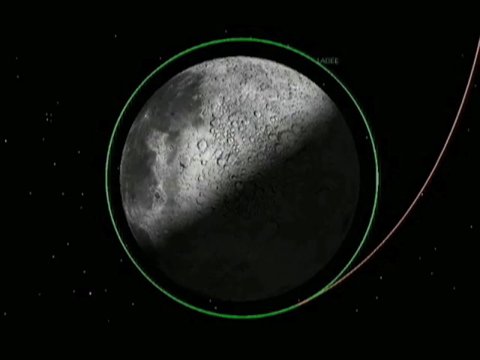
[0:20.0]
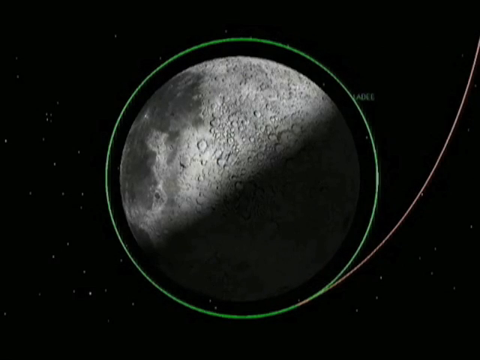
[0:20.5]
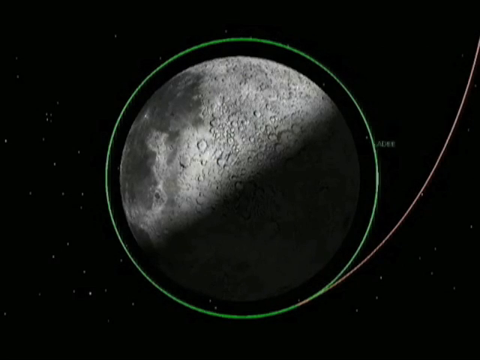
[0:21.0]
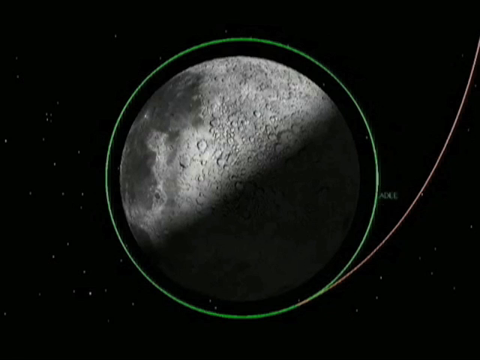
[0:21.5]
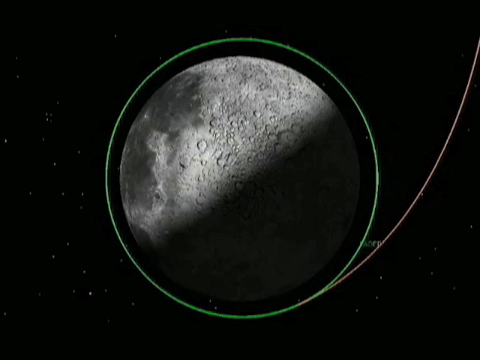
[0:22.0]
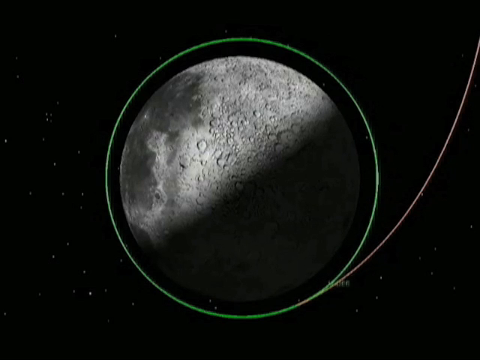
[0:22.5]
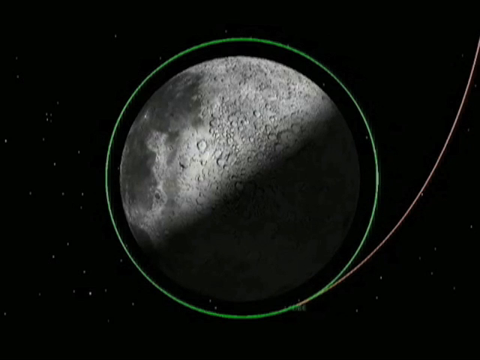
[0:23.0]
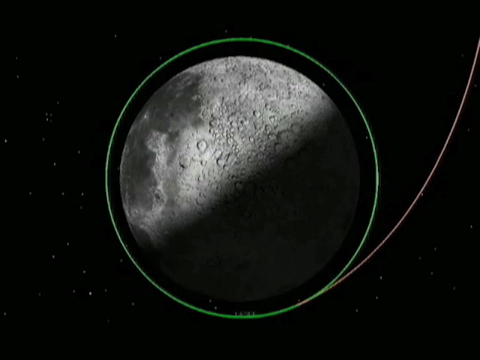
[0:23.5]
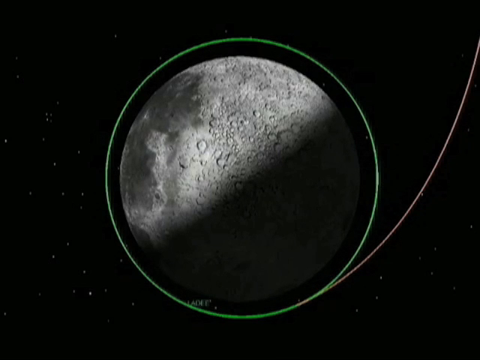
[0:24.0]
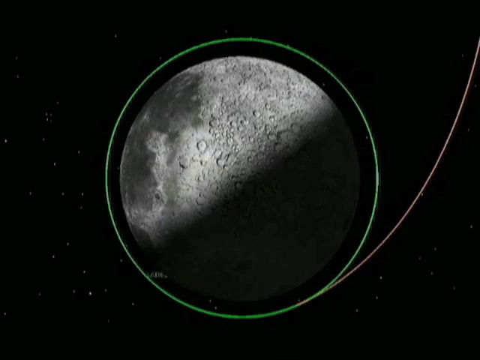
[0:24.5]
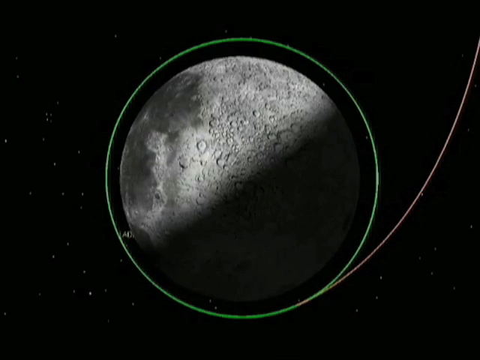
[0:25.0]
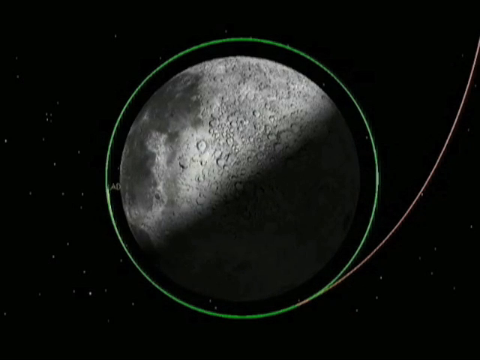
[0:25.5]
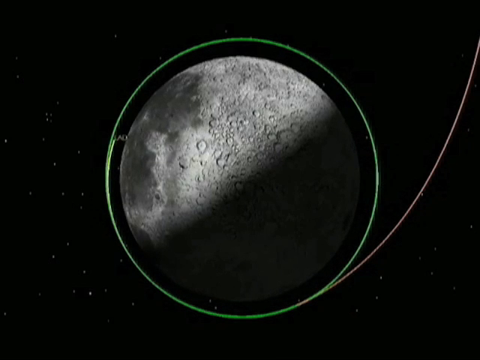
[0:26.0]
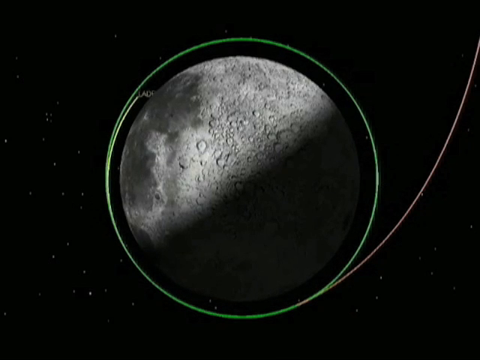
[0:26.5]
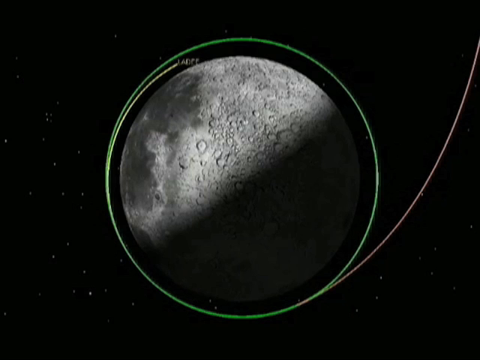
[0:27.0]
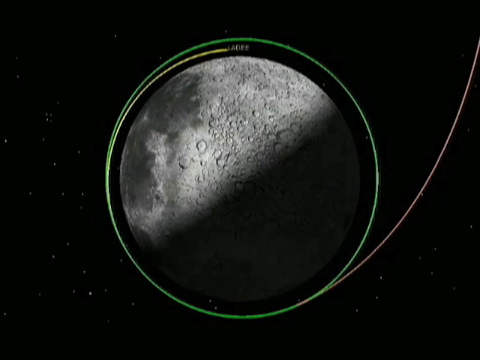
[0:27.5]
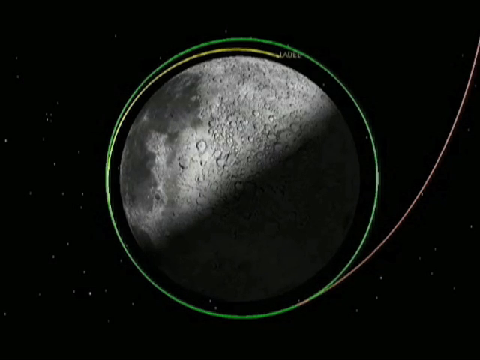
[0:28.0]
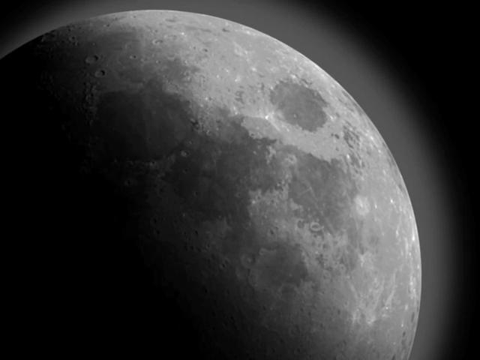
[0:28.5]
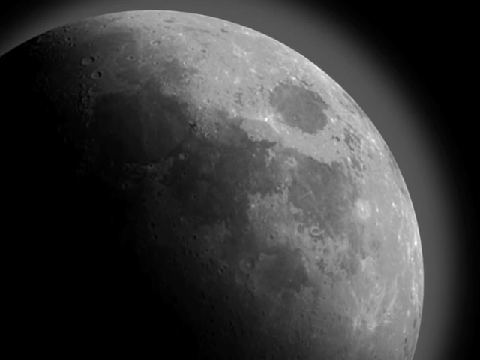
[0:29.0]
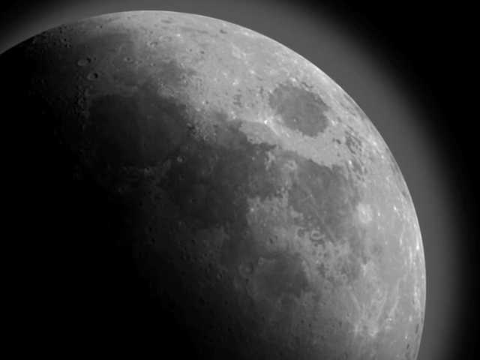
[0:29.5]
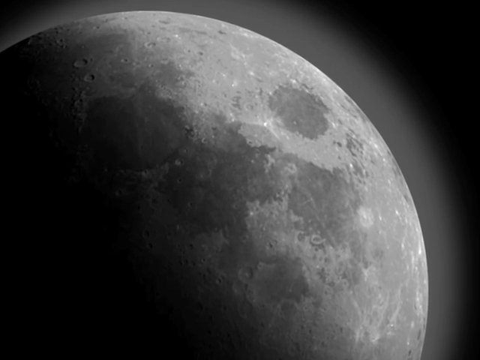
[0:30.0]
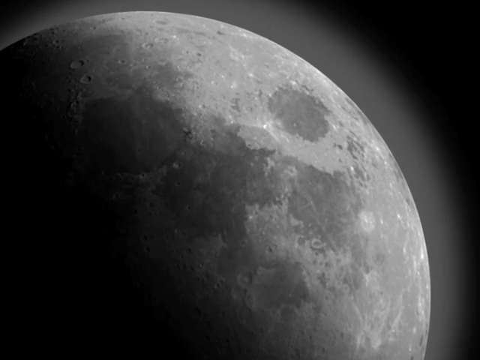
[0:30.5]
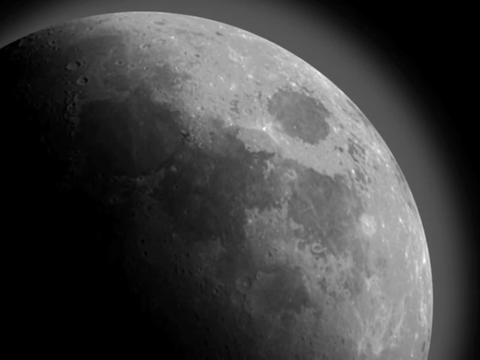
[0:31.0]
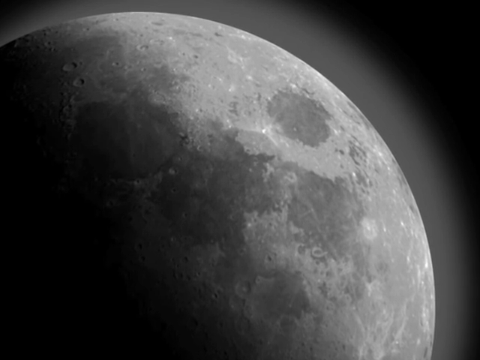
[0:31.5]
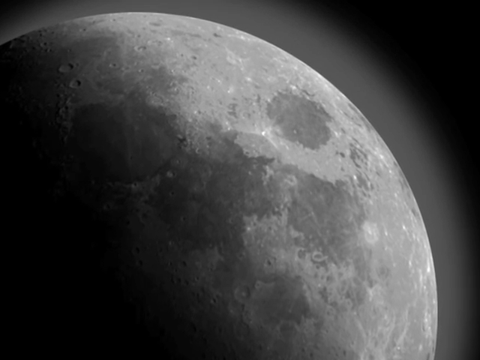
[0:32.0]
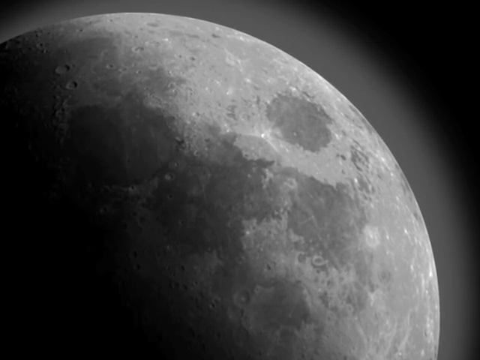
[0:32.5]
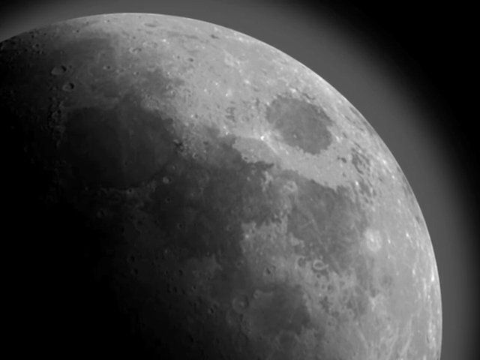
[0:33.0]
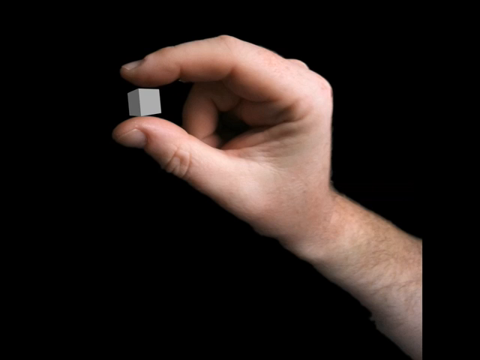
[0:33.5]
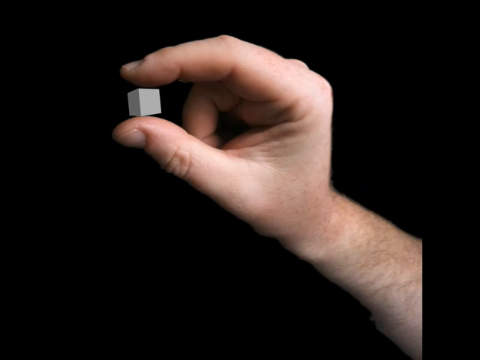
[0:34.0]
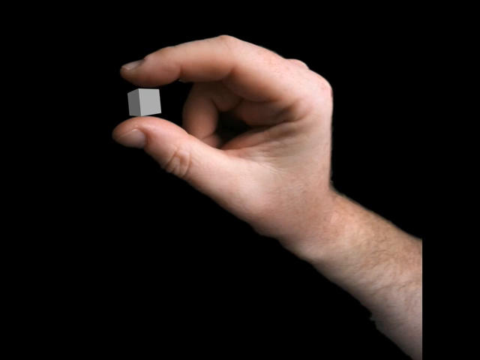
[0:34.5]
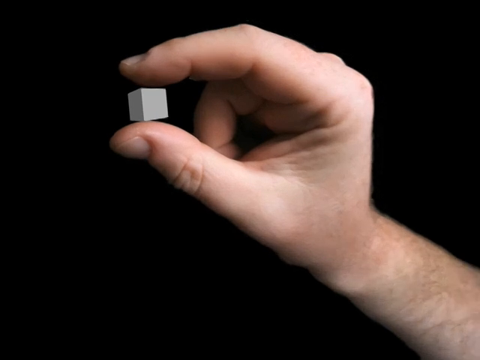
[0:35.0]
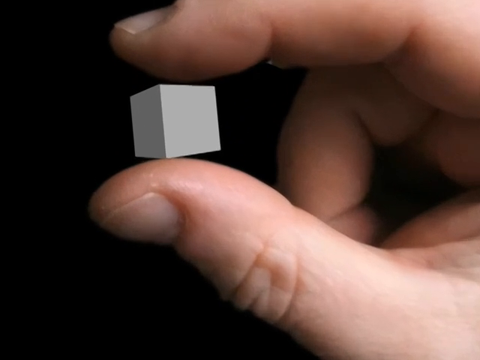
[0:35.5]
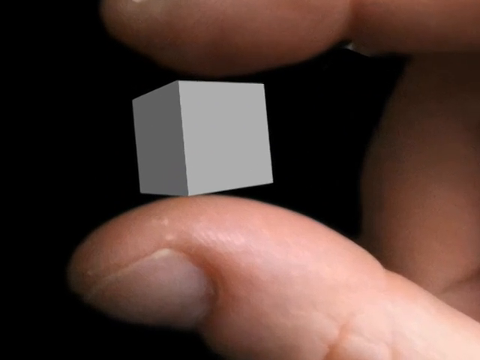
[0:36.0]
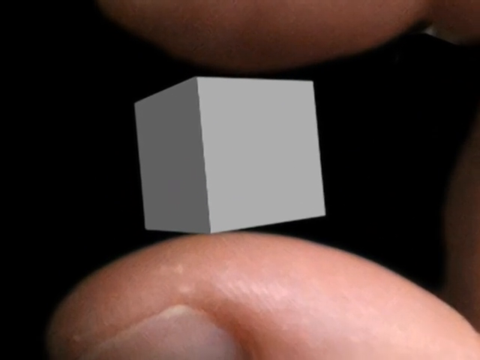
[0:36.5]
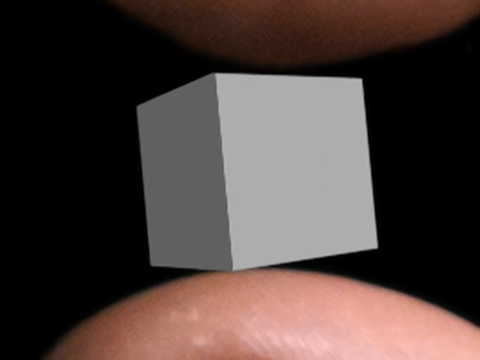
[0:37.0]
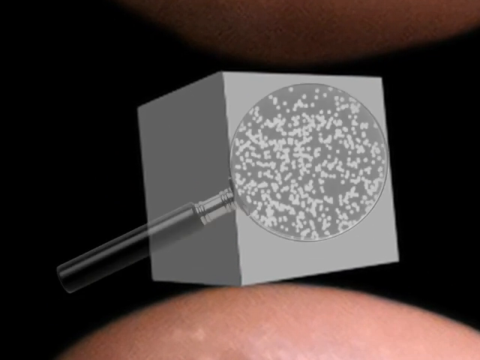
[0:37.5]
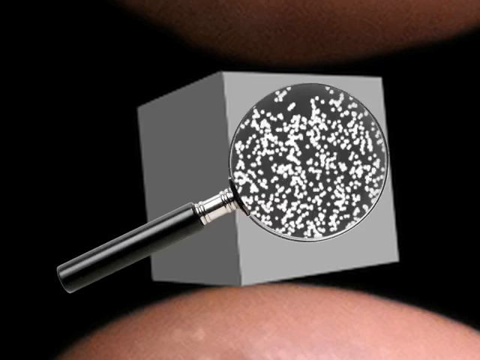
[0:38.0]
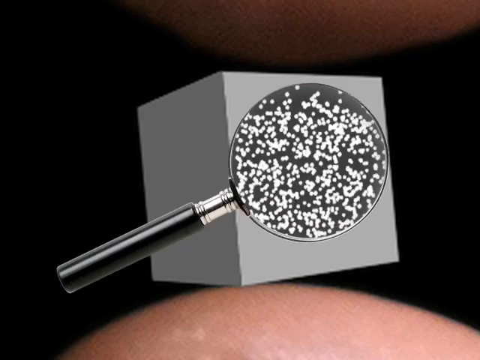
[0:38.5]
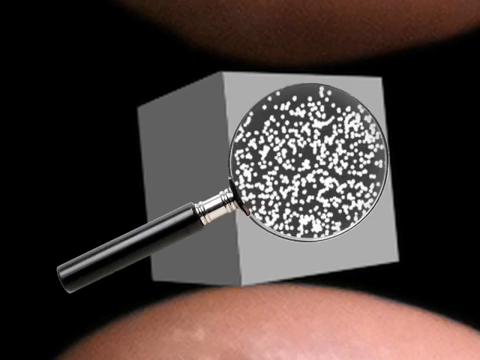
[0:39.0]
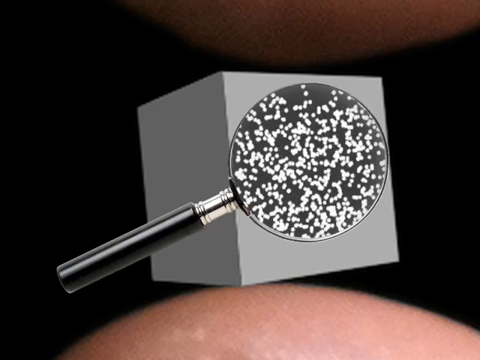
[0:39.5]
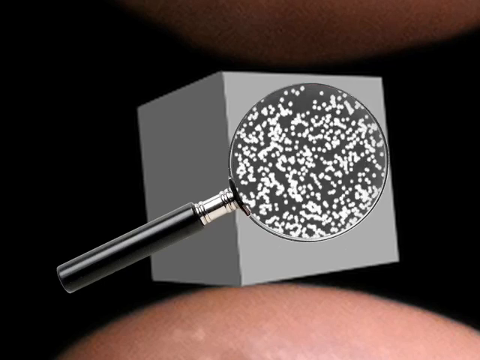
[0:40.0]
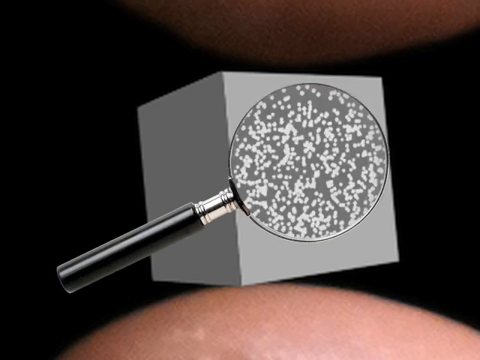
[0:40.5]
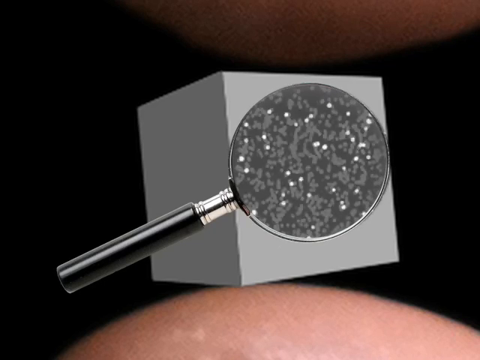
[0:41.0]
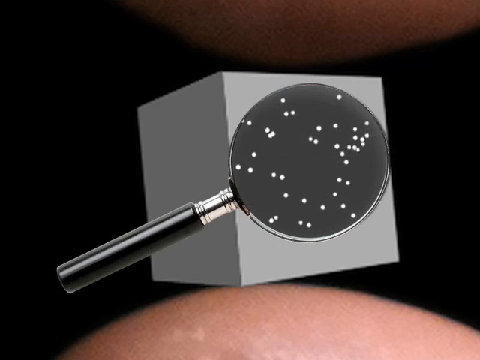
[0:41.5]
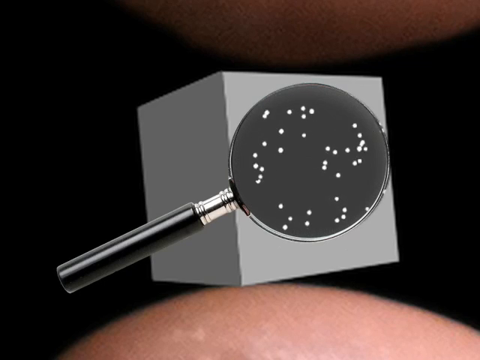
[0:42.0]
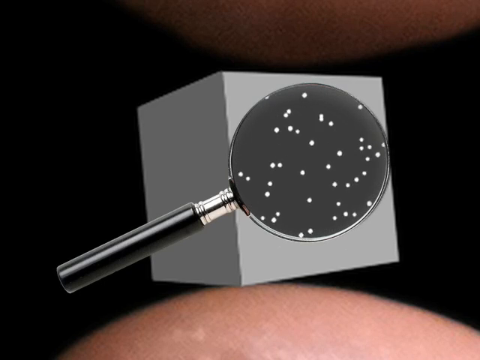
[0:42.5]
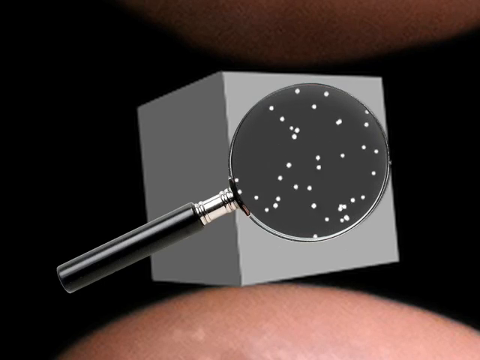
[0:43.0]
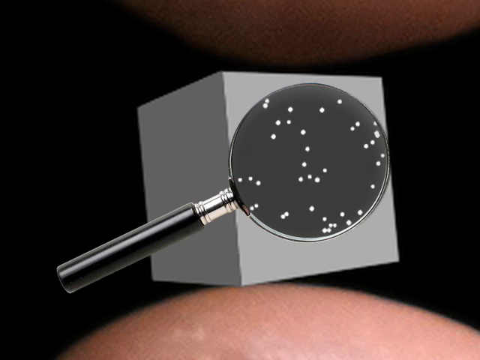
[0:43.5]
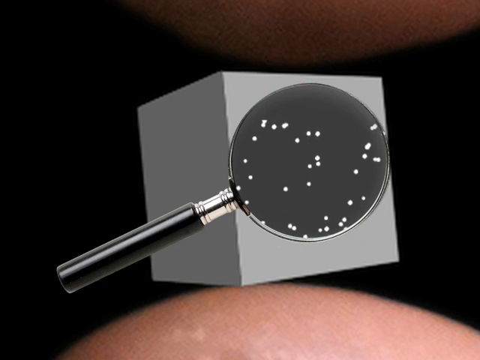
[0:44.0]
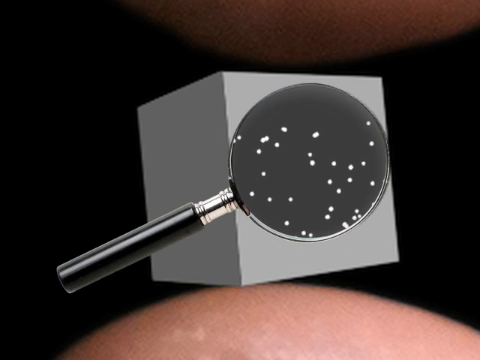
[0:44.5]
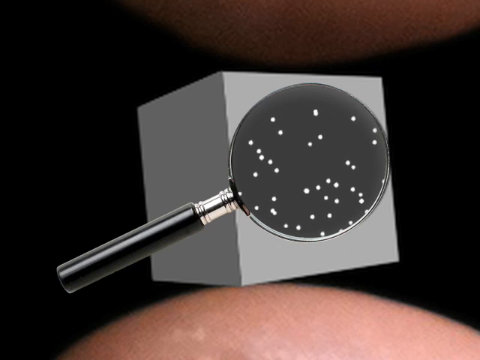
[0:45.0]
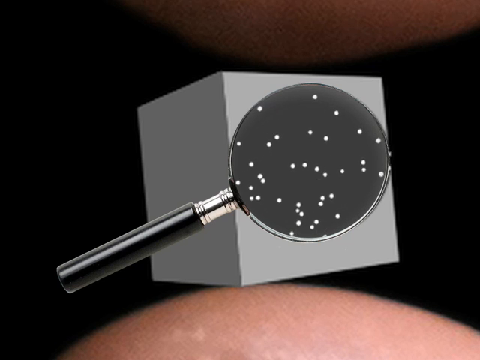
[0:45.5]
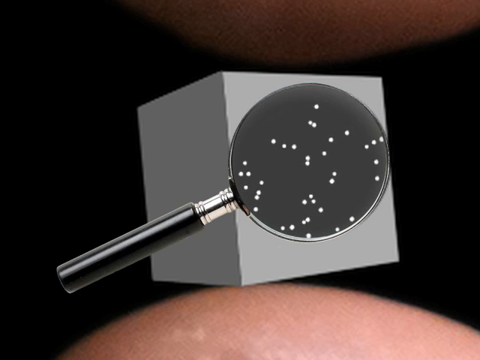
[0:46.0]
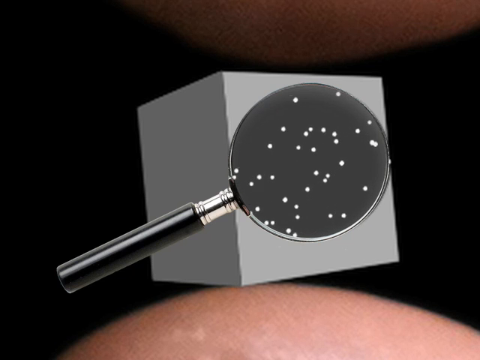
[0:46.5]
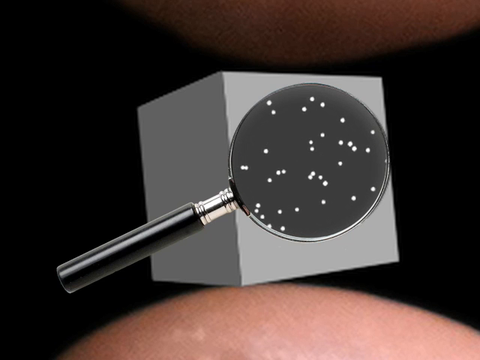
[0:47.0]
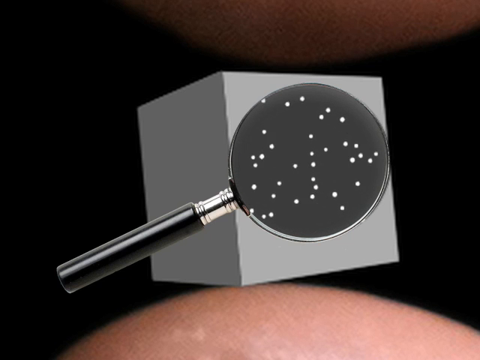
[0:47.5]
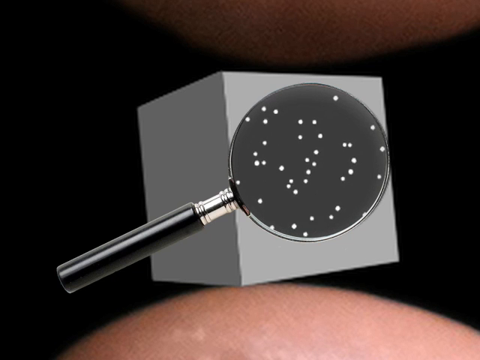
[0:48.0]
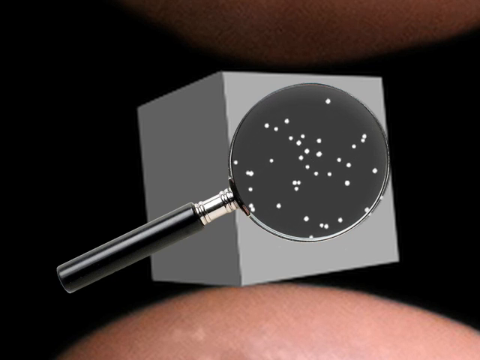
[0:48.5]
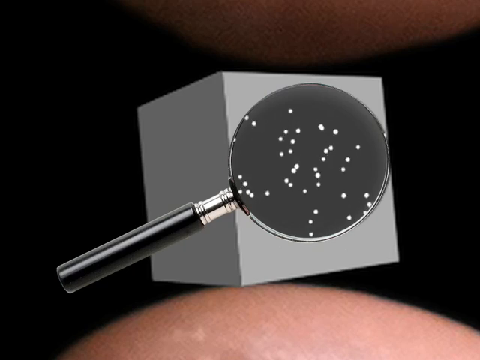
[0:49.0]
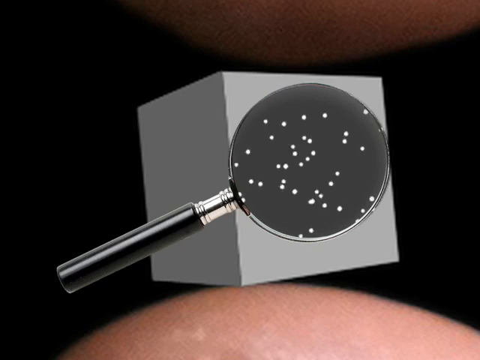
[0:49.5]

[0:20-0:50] The scene appears to be in outer space, showing what looks like the moon with half of it covered in shadow and a green circle line around it. At one point the line goes off the screen and turns white. Something, possibly a number, goes around in a circle, creating more of the green line. The view switches to an aerial view of what appears to be the moon, circular in outer space with a black haze around it. It is gray with splotches of dark gray, and its crevices are almost visible. Next, a hand holds a cube between two fingers; the hand seems to belong to a Caucasian person who chews their nails. The camera zooms up on the cube, and someone puts a looking glass on it, revealing what looks almost like bacteria and other things moving around, as if seen through a microscope.